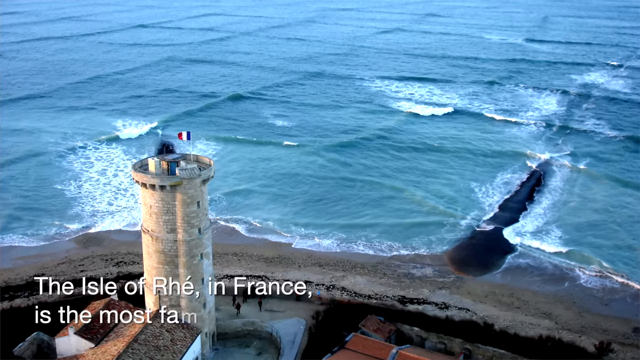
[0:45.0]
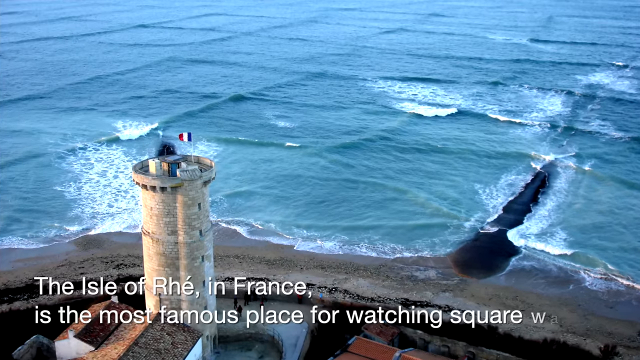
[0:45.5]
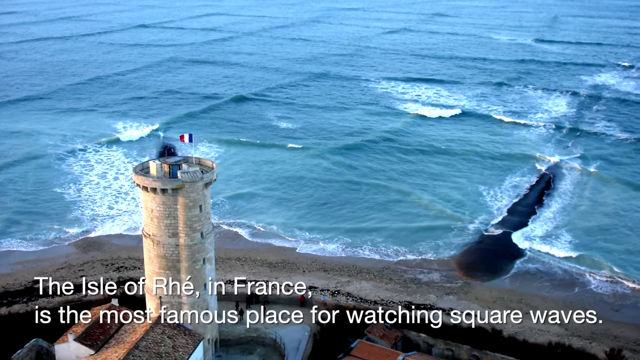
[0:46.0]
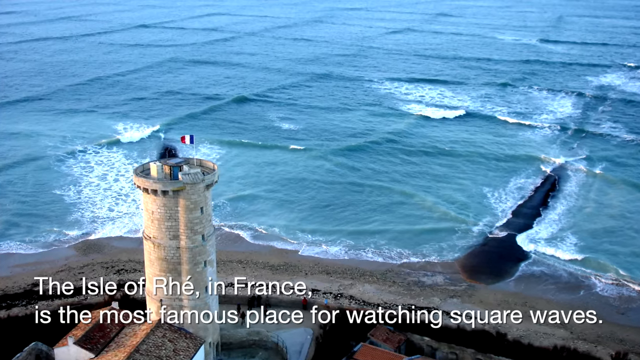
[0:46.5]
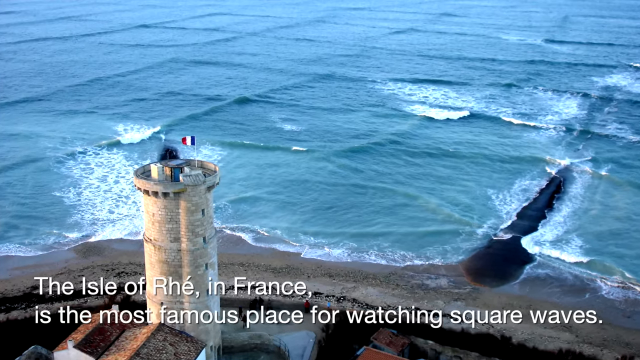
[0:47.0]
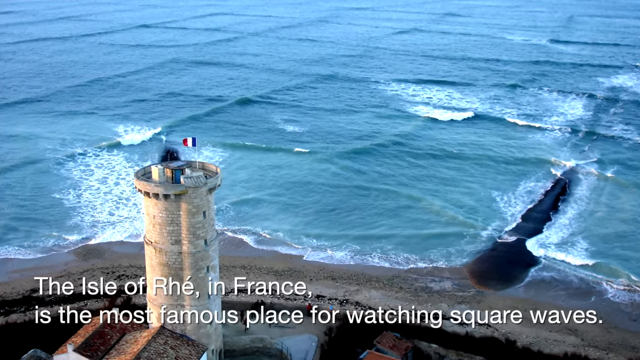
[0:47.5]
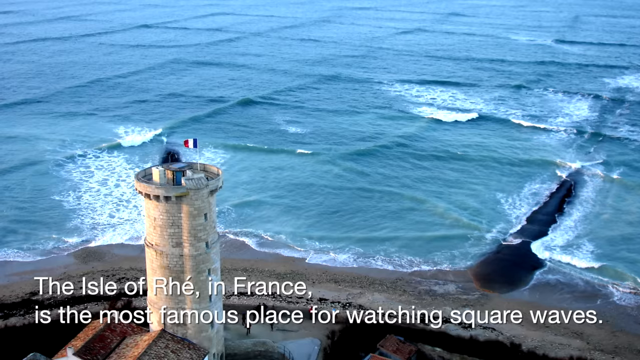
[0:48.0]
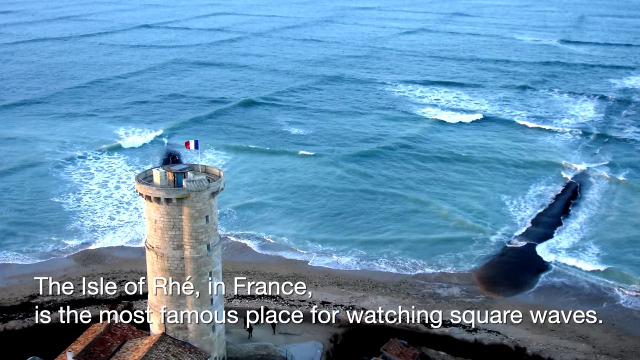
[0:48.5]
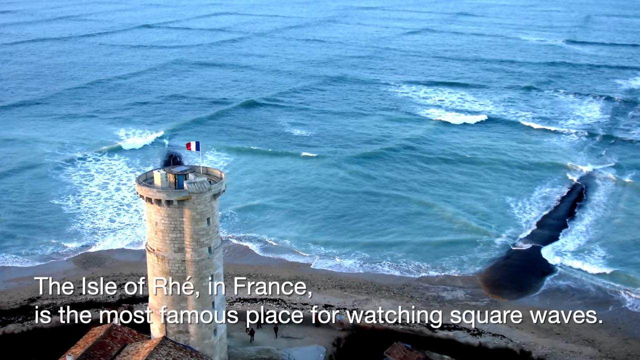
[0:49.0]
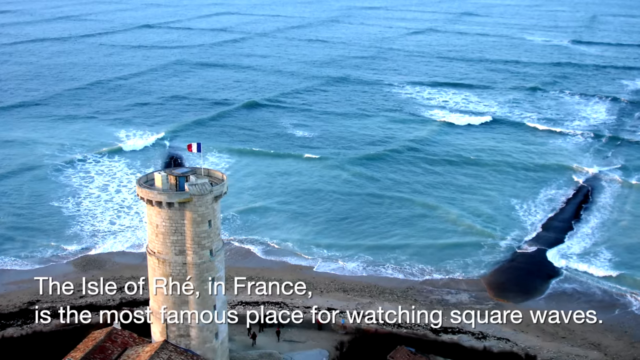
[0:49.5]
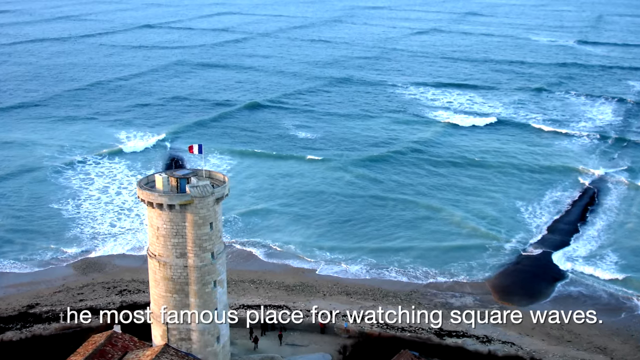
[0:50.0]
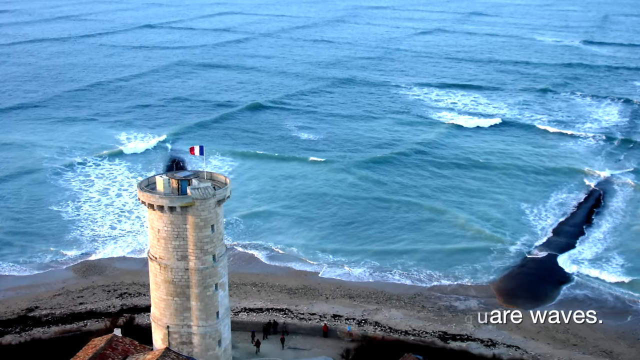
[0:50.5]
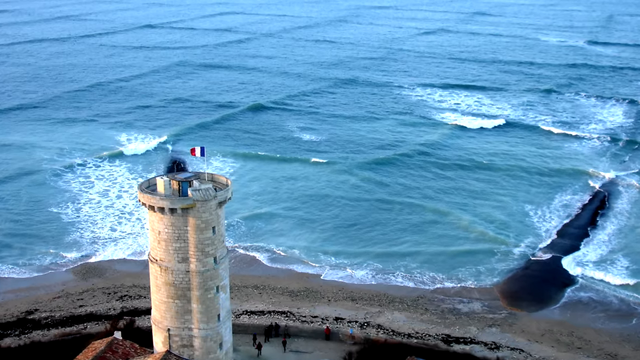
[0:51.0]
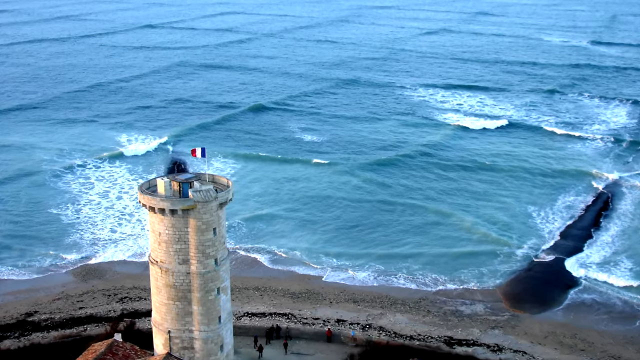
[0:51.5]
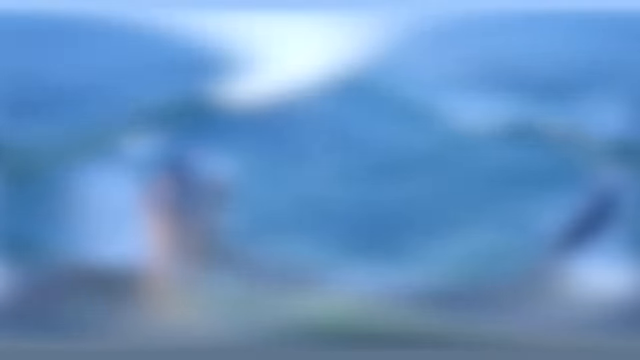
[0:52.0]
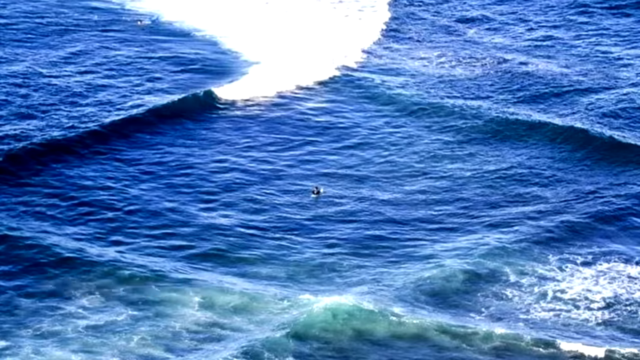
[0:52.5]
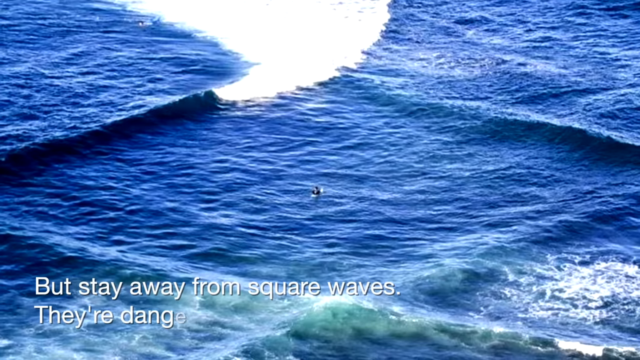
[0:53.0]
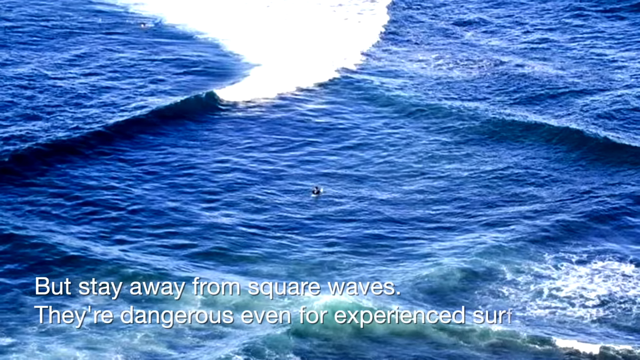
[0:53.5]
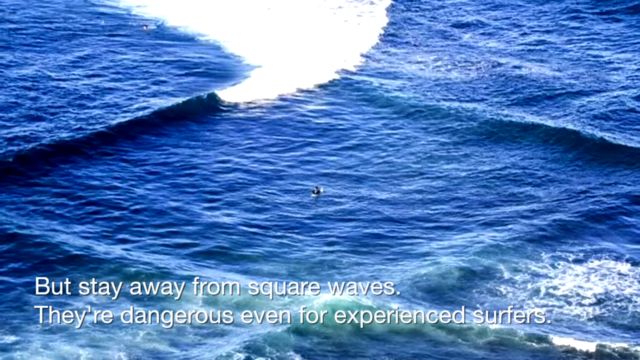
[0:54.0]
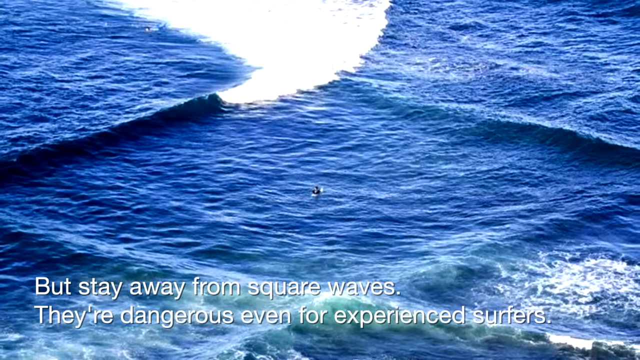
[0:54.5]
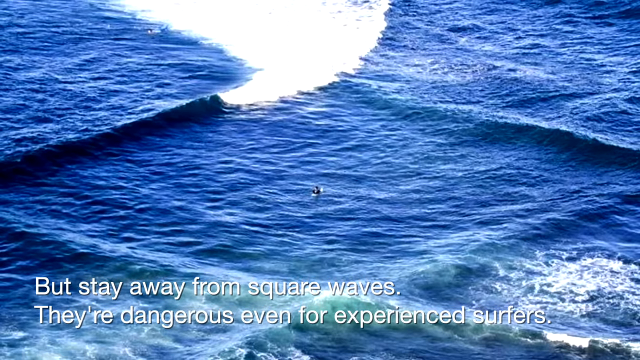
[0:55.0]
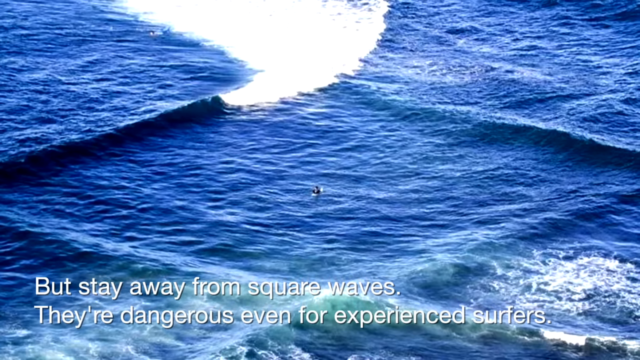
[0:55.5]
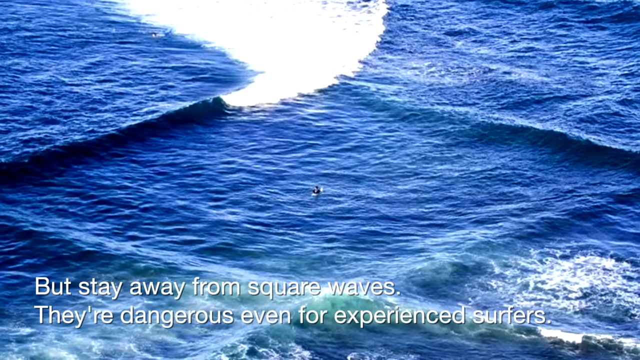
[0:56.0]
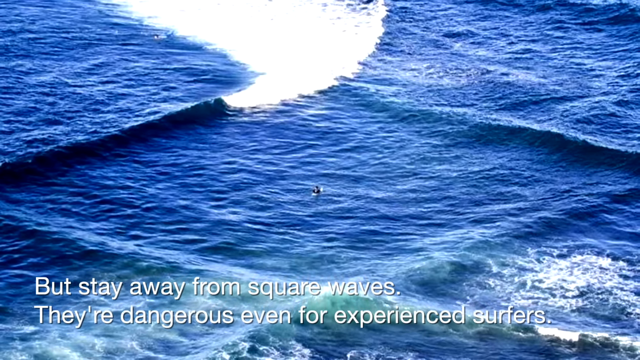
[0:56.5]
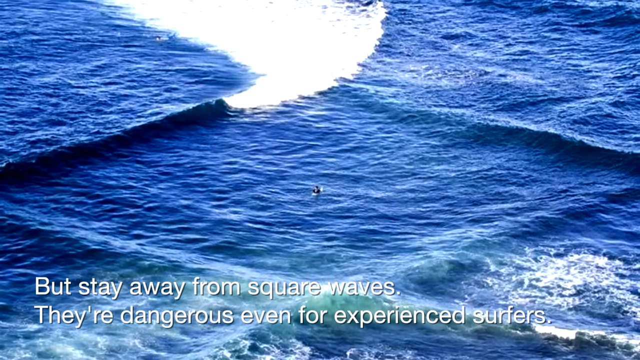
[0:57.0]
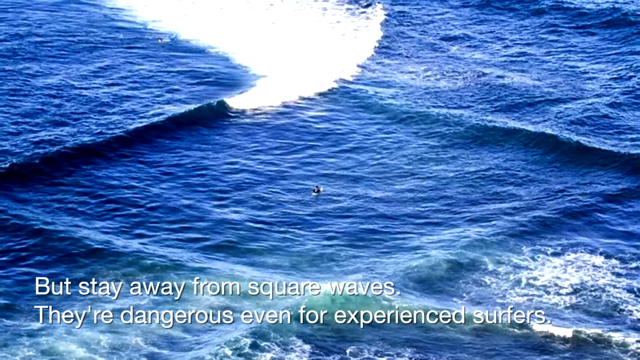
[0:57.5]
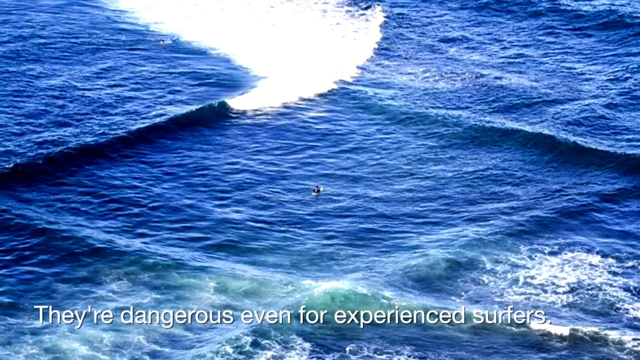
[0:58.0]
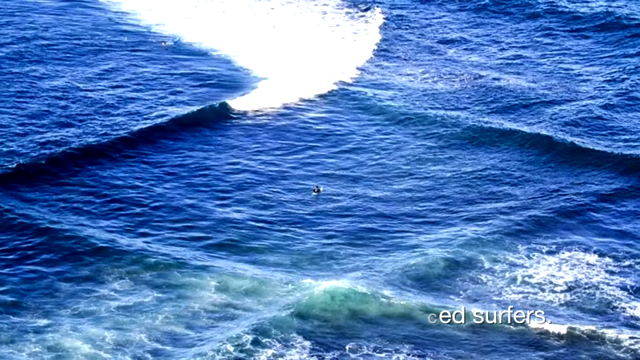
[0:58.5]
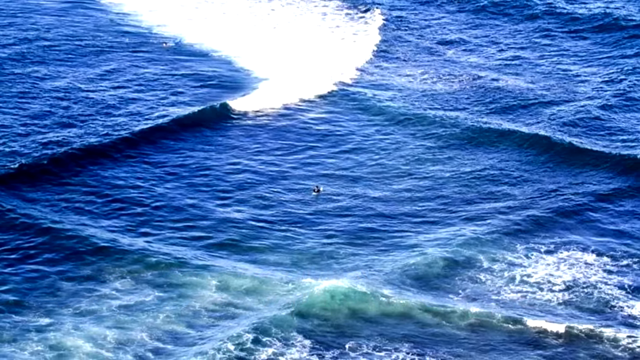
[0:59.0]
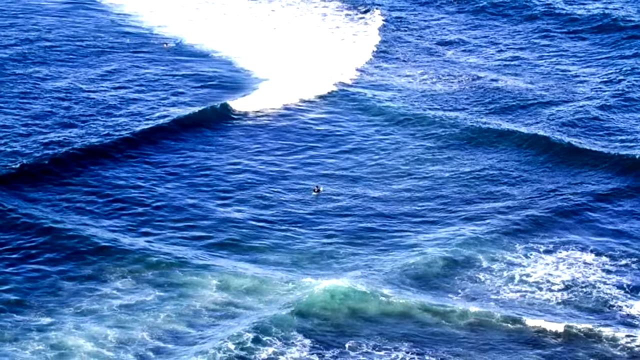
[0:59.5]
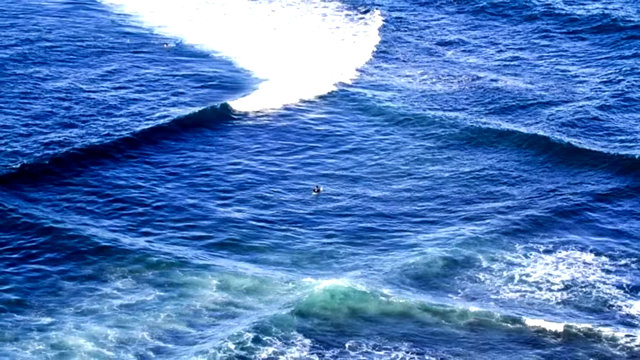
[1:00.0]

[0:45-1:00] Another aerial view of square waves shows the camera focused on one square on the body of water, with a person in the middle. The square wave is huge, and the person is dwarfed in the middle of it, appearing like an ant or just a dot; nothing about them can be made out except that it is a person. They seem to be kicking up the water, and white caps are visible around them where they might be splashing. The square's borders are quite prominent and the square waves are quite high, with much smaller waves within the square. It is daytime, with blue water.